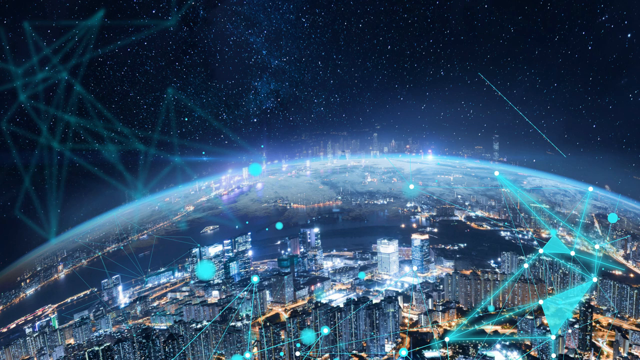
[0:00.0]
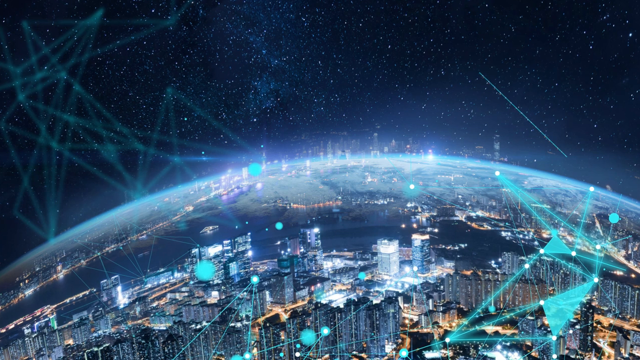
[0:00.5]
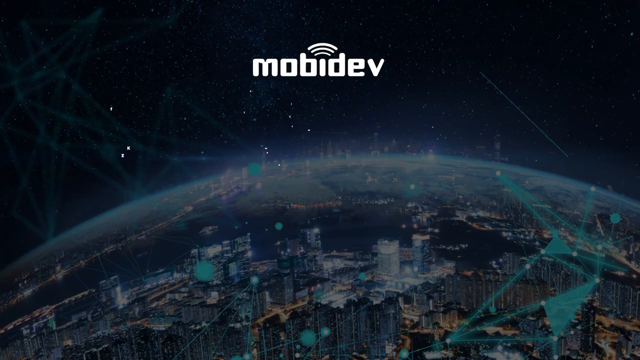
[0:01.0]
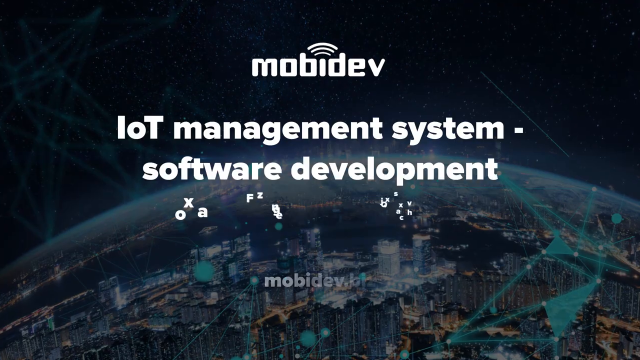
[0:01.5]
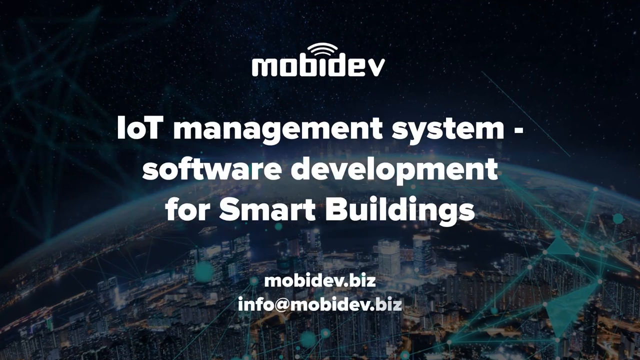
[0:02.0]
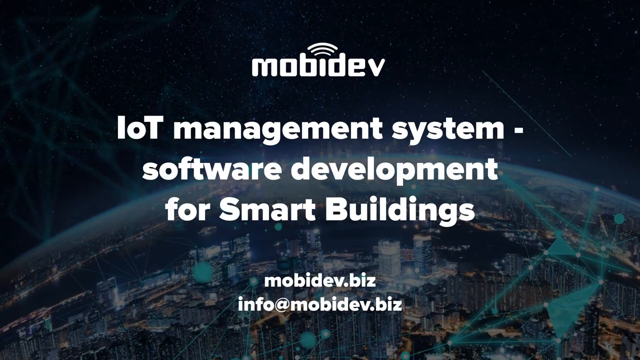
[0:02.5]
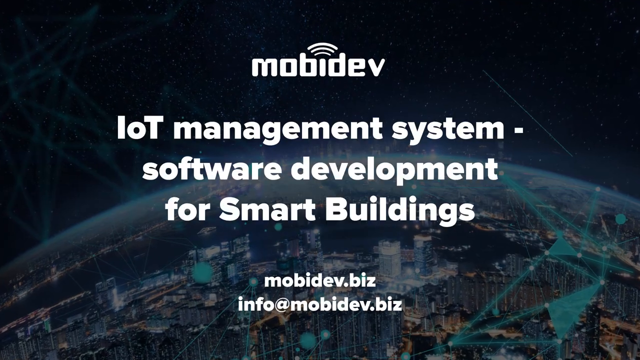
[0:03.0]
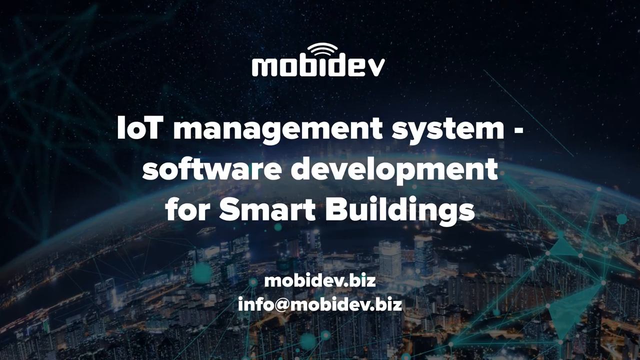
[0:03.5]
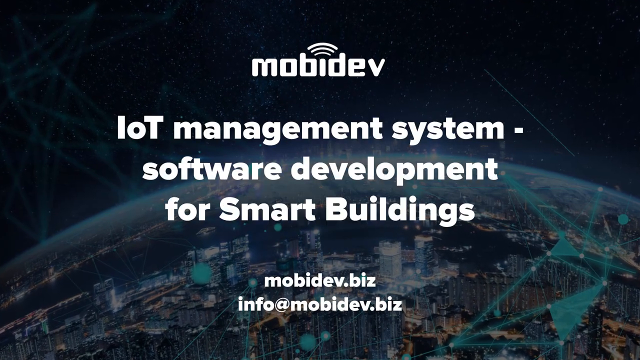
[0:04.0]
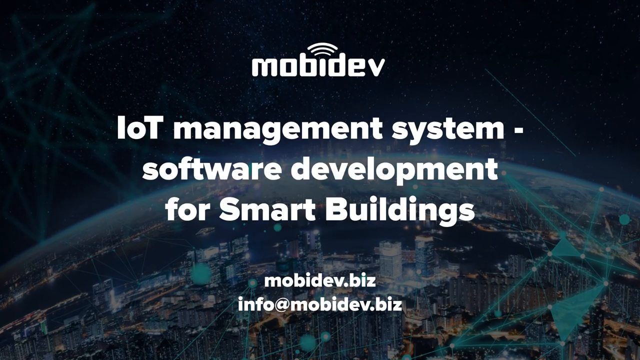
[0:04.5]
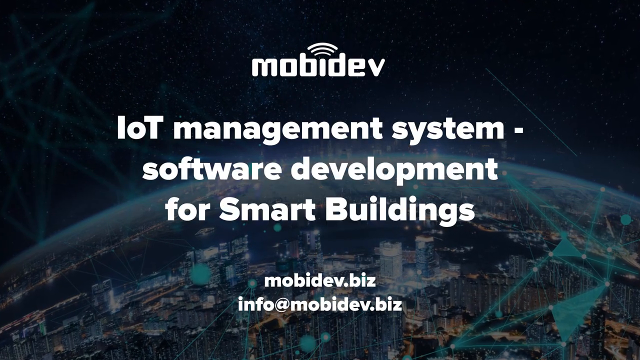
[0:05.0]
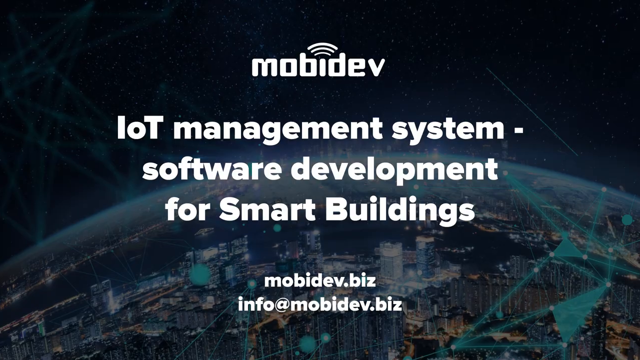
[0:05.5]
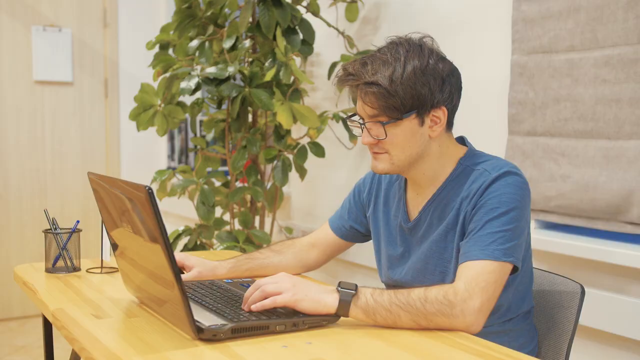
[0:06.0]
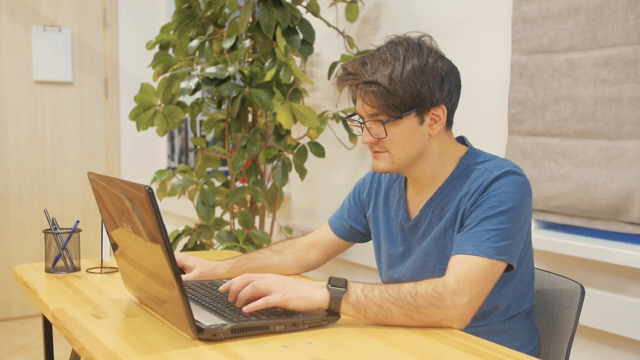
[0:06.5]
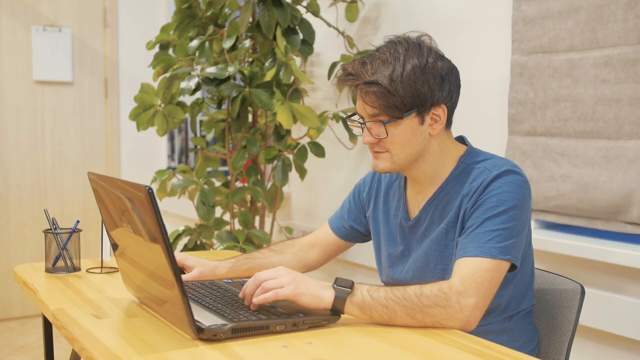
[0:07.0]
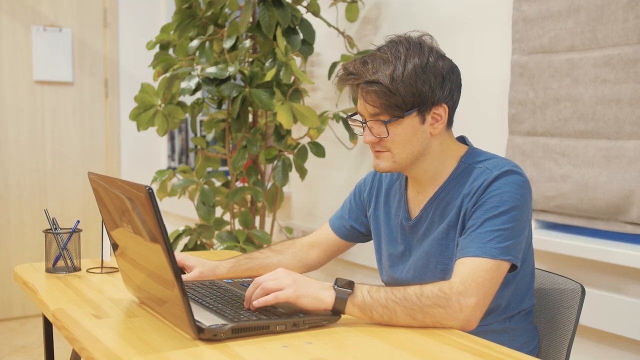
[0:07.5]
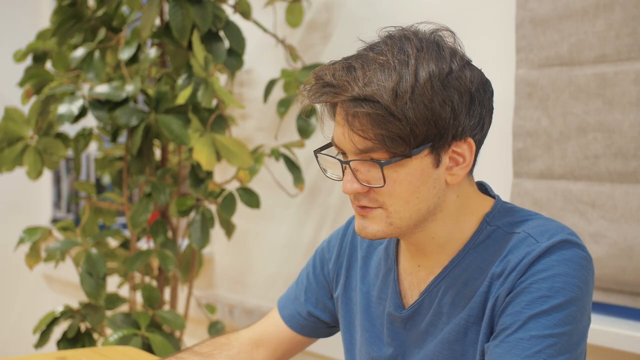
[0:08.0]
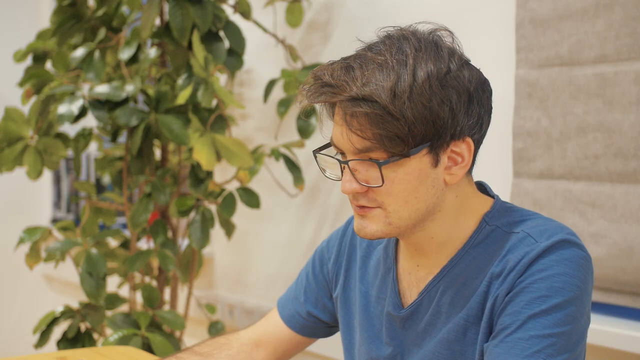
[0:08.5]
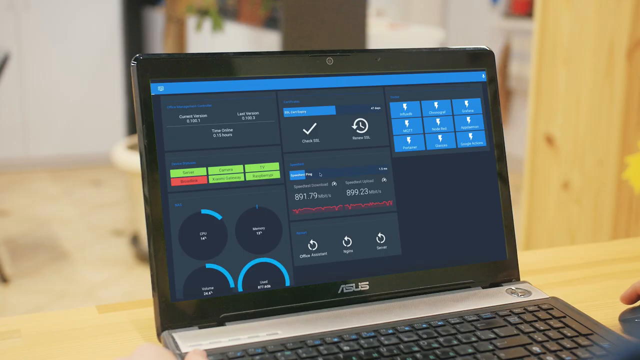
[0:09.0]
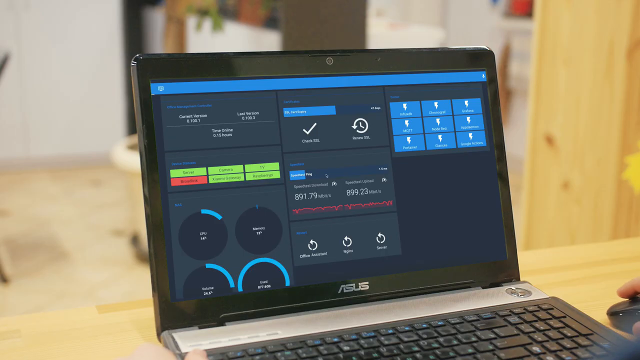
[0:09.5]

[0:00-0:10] The video opens on an image of a globe, and text at the top reads "MOBIDEV," which looks like the company's logo. A Wi-Fi signal comes off the eye. Below it, text reads "IoT management system, software development for smart buildings," suggesting this is apparently a company that develops software to help operate smart buildings. Beneath that are a website address and an e-mail address, with the globe image still in the background. The scene then shows a man seated at a desk, working on a laptop and facing to the left. He wears glasses and a wristwatch on his left hand, and his brown hair comes down to just about his eyebrows. The laptop is shown to be an ASUS.